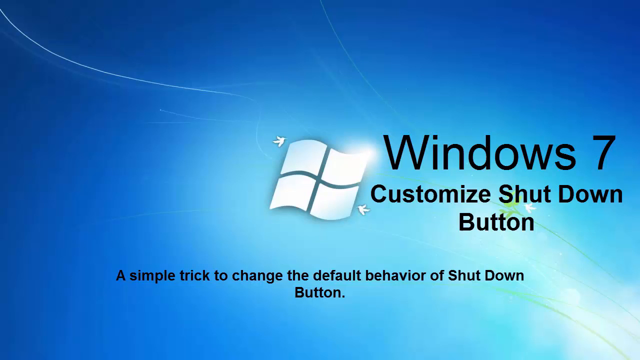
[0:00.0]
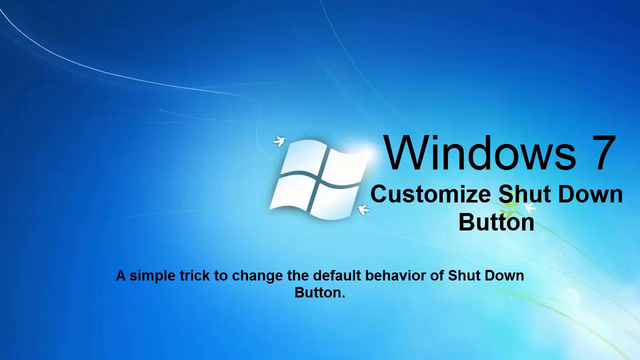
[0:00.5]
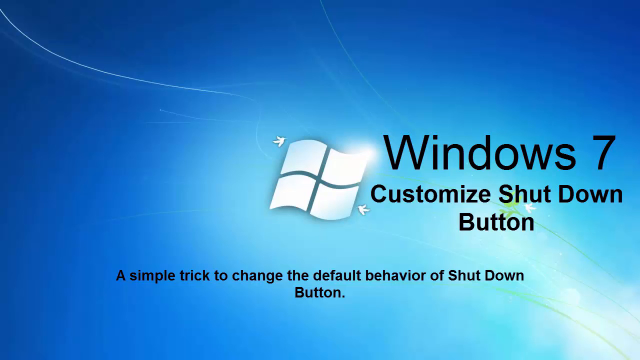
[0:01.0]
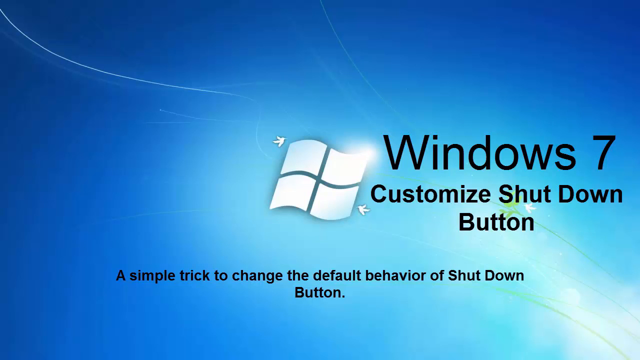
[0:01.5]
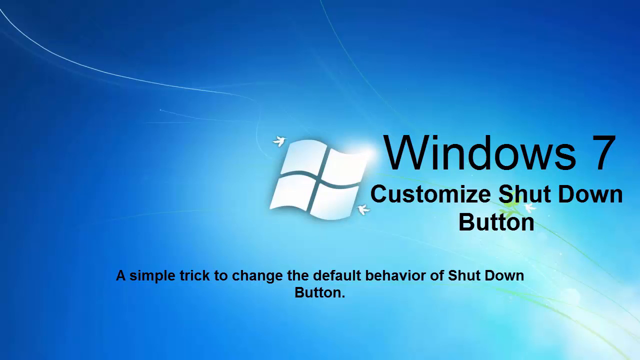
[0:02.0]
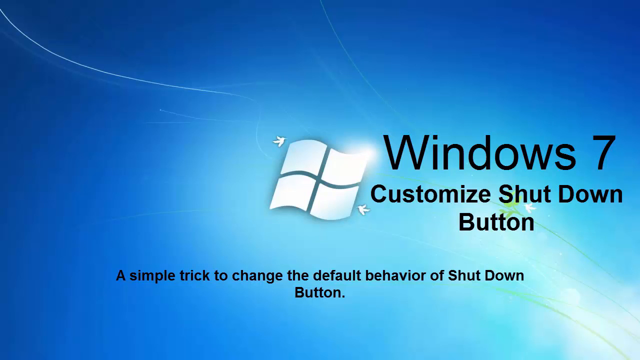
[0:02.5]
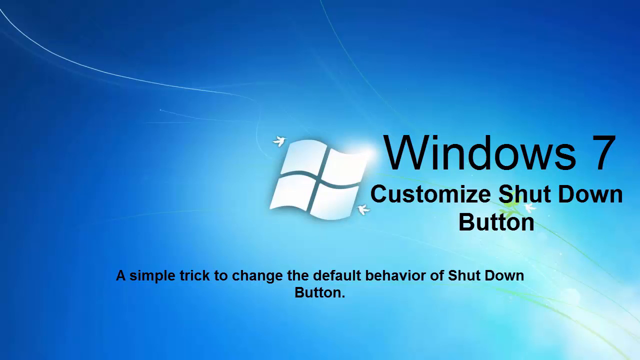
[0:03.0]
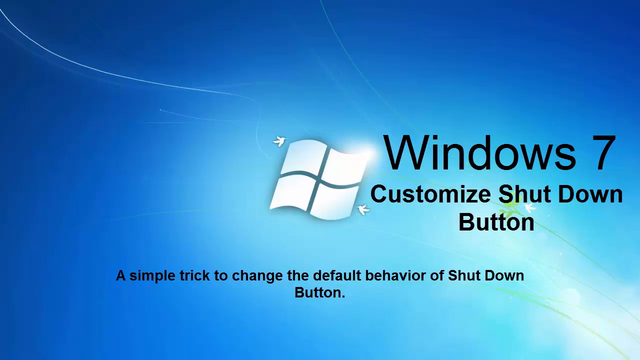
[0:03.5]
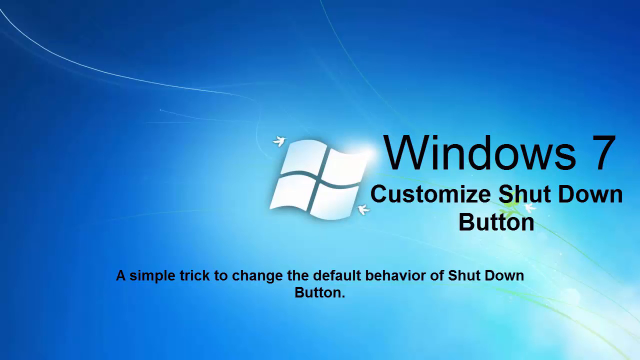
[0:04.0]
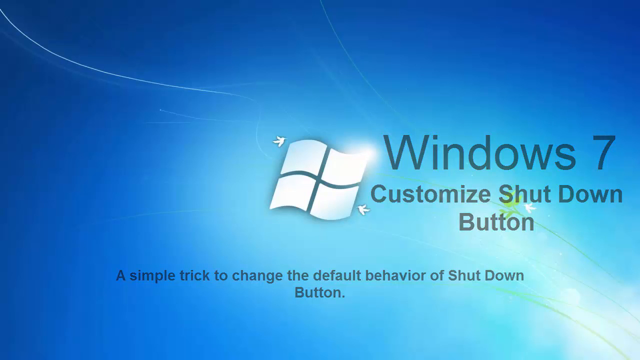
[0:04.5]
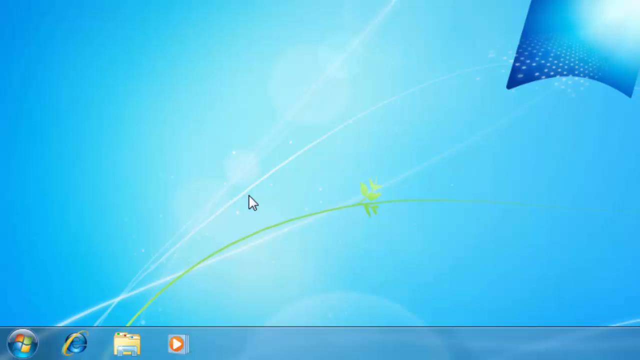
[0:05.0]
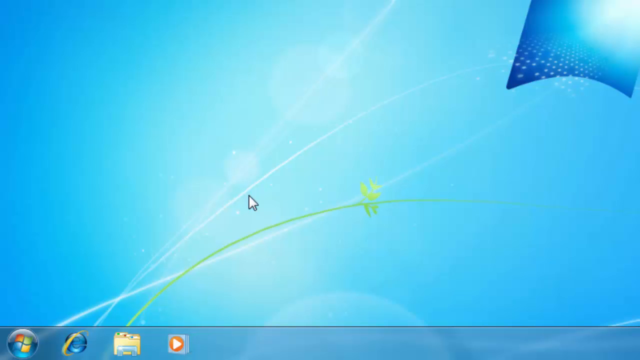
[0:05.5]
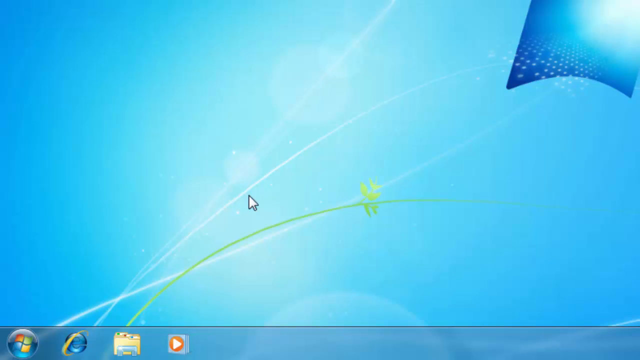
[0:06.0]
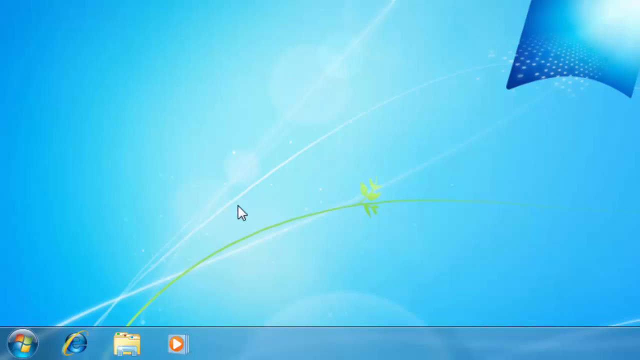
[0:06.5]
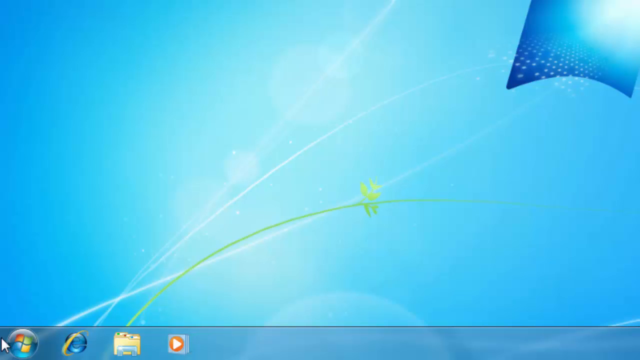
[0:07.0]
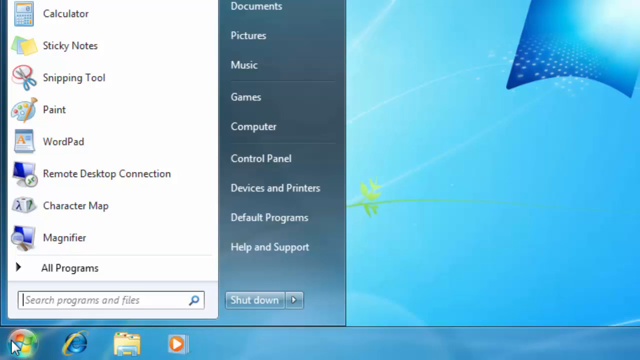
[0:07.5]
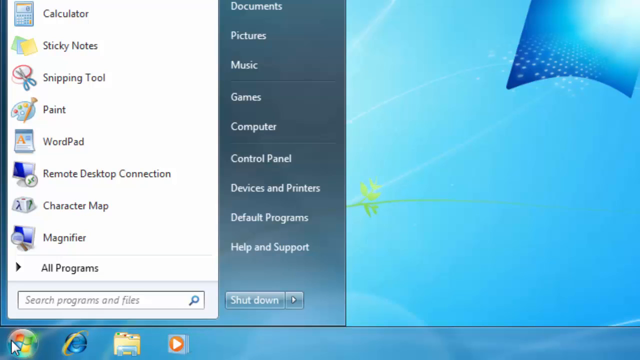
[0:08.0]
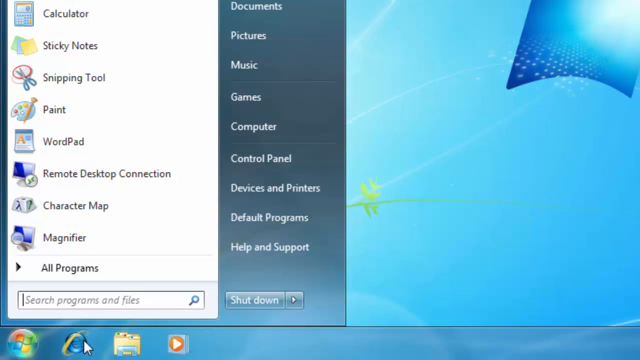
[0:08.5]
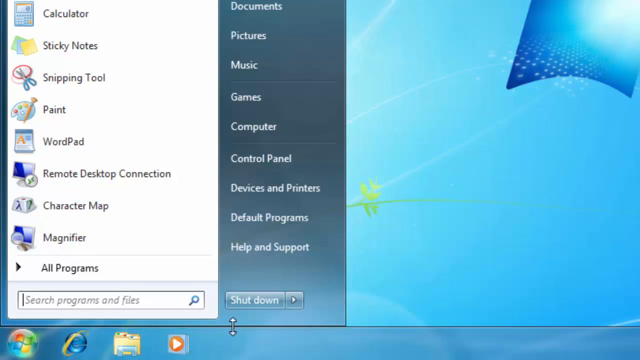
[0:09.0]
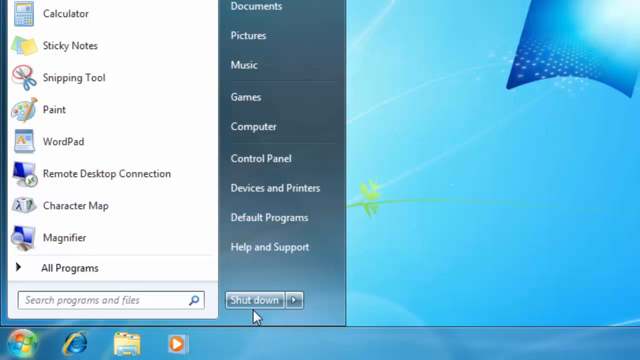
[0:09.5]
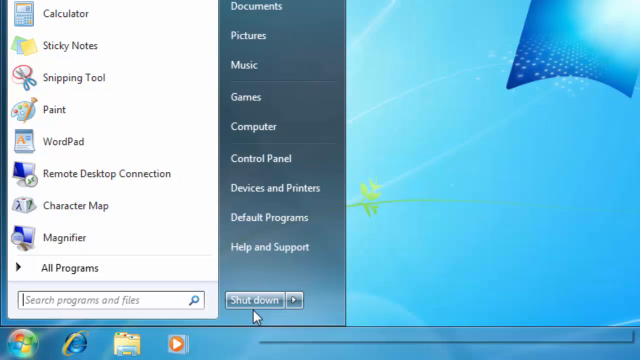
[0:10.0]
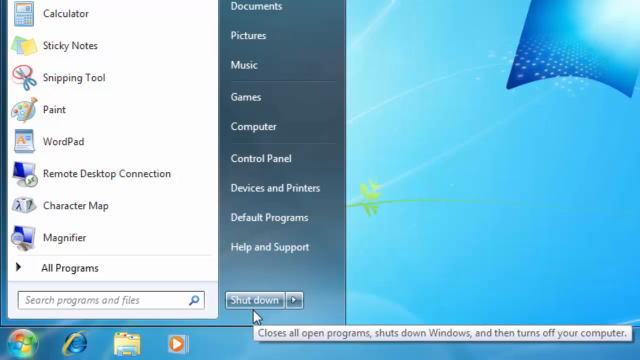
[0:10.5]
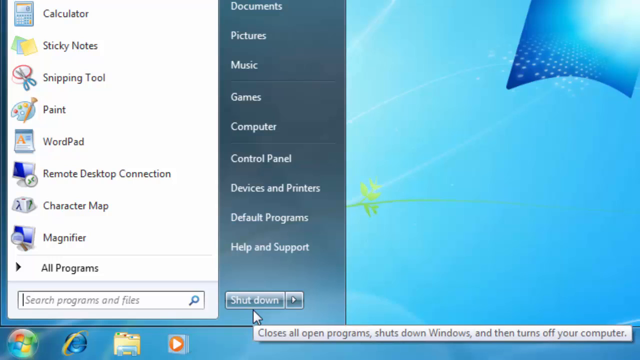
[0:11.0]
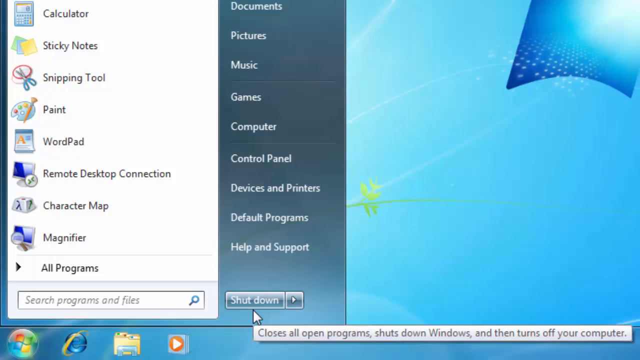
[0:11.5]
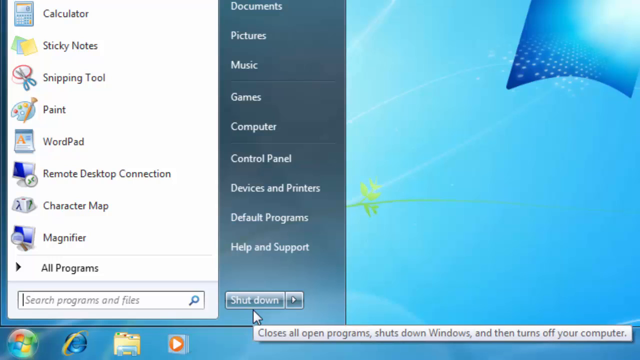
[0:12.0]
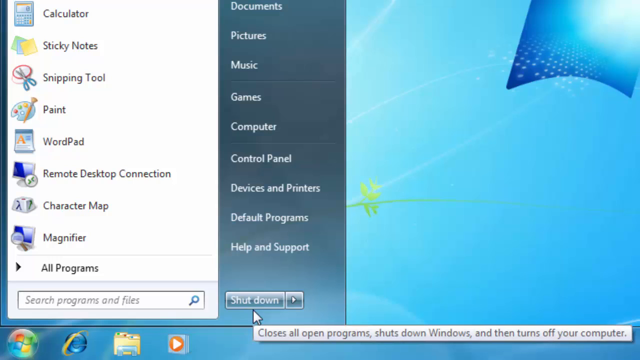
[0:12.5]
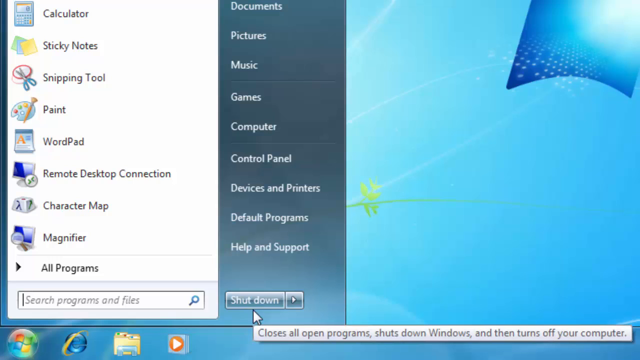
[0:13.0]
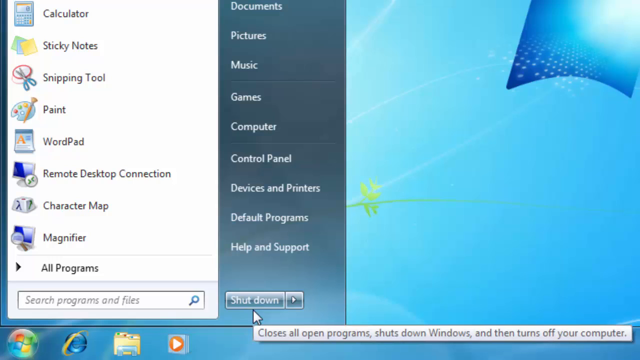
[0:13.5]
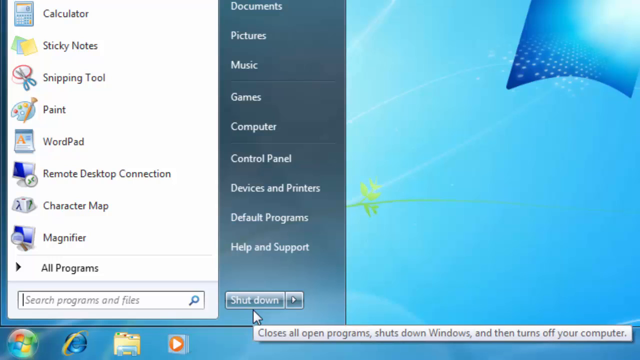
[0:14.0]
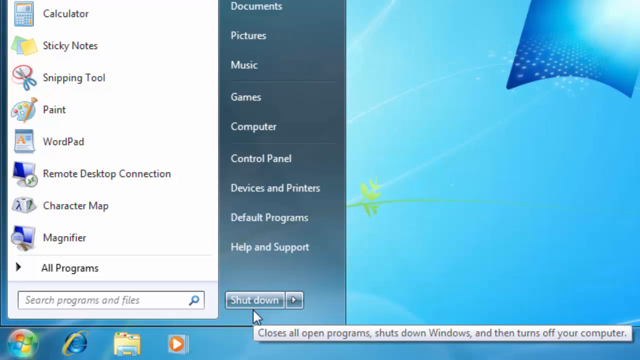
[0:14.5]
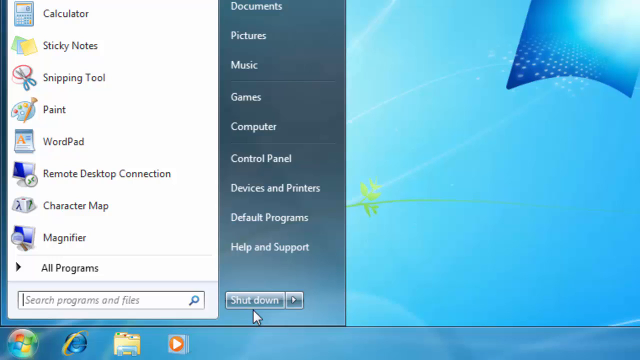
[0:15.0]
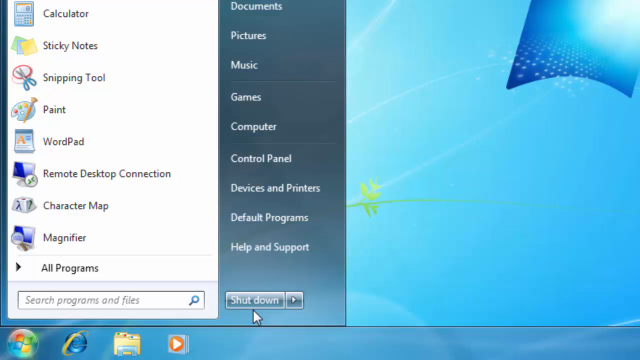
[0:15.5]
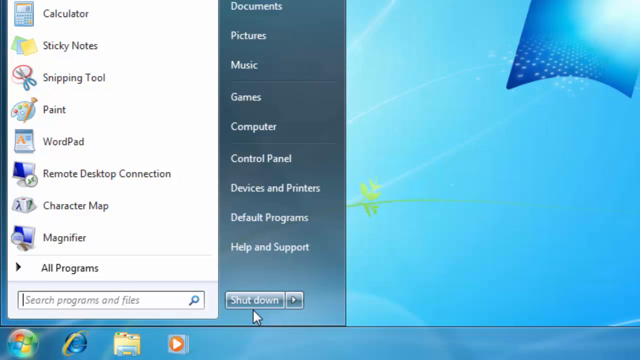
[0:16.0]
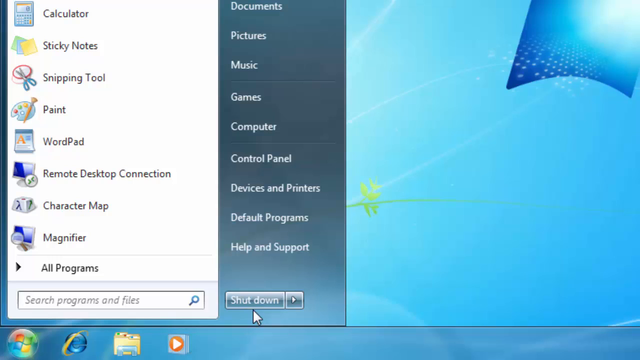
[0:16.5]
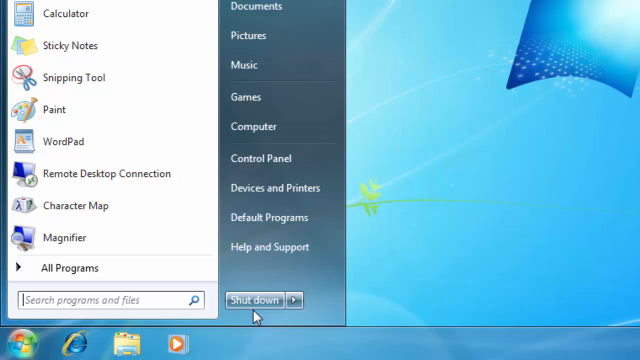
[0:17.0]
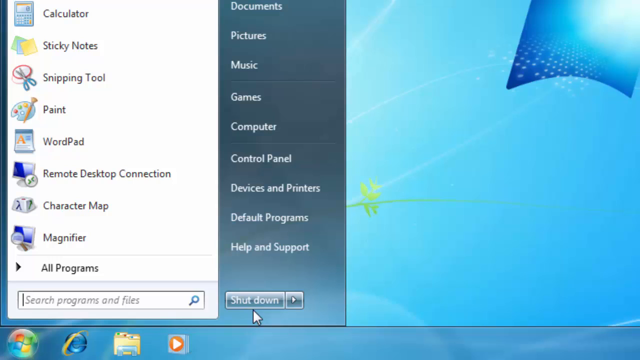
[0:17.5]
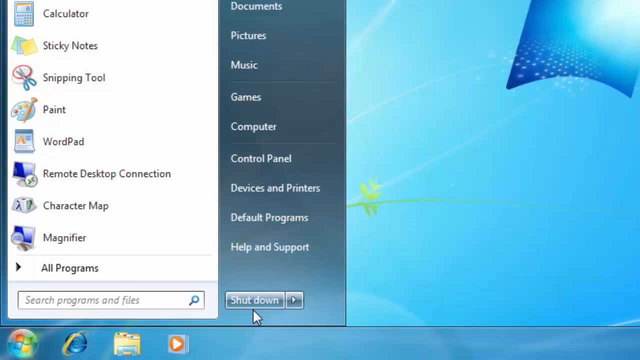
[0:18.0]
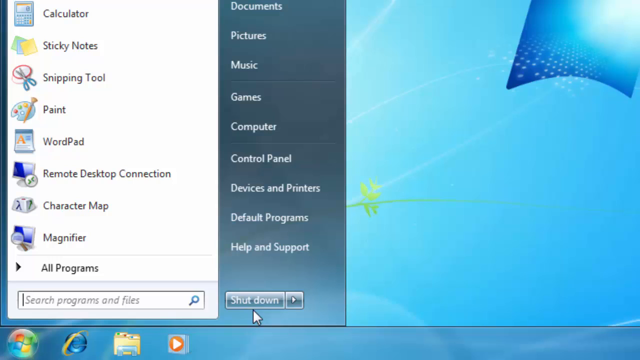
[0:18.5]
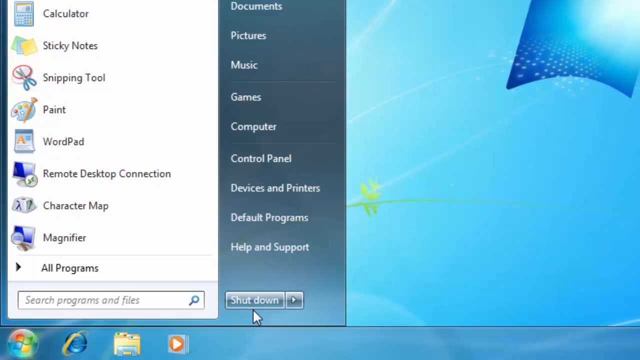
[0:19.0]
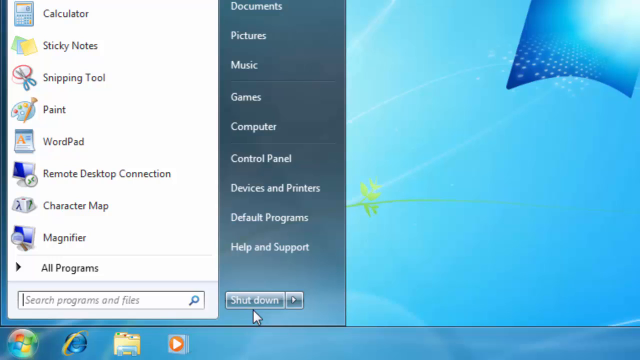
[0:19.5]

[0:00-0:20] On-screen text reads "Windows 7 custom shutdown button a simple trick to change the default behavior of shutdown button". A person presses Start, and many options appear, including calculator, sticky notes, snipping tool, paint, work pad, remote desktop connection, character map, magnifier, all programs, documents, pictures, music, games, computer, control panel, device and printers, default programs, help, support and shutdown. The system is apparently Windows 7, with a blue background. Among the pinned items there is Explorer. The system is a bit slow.